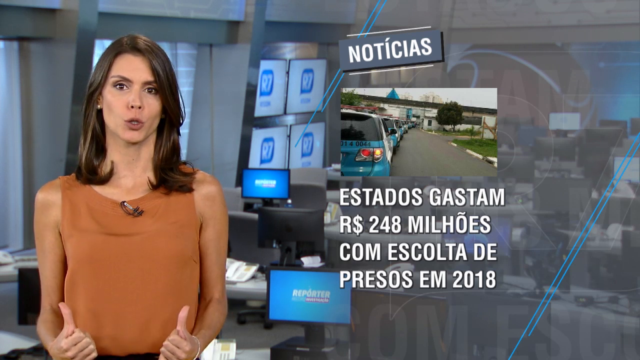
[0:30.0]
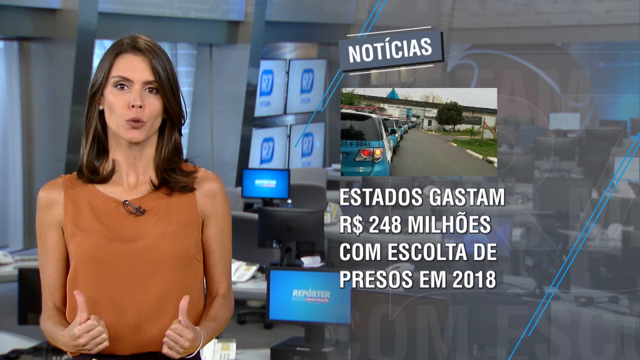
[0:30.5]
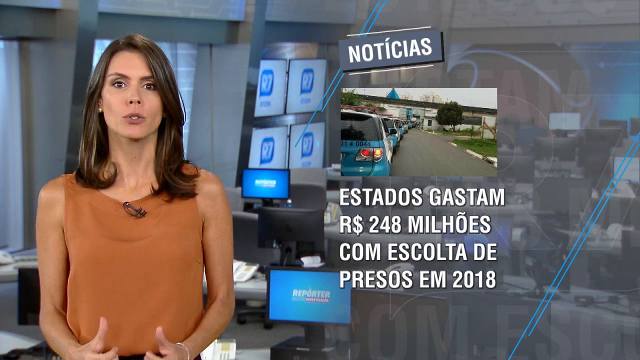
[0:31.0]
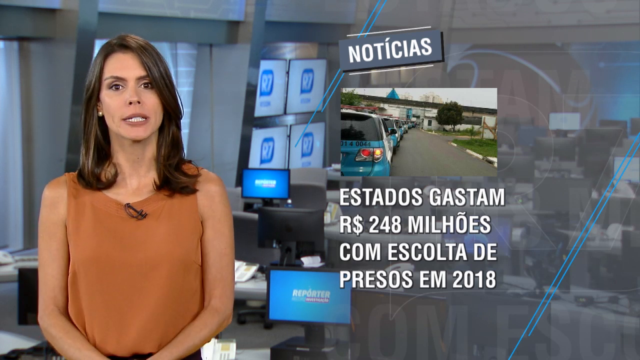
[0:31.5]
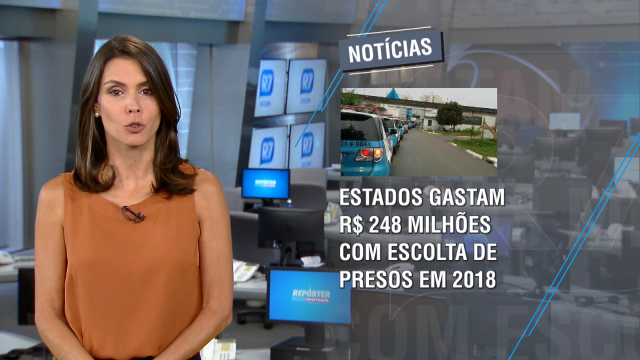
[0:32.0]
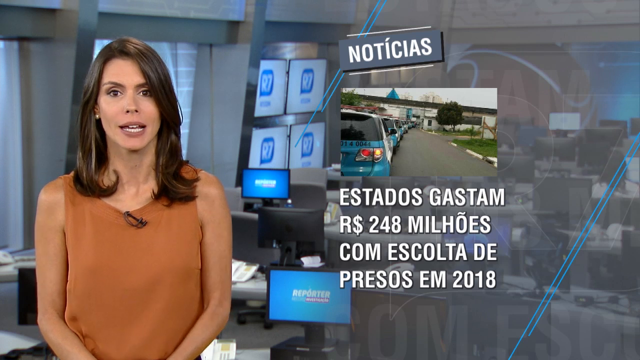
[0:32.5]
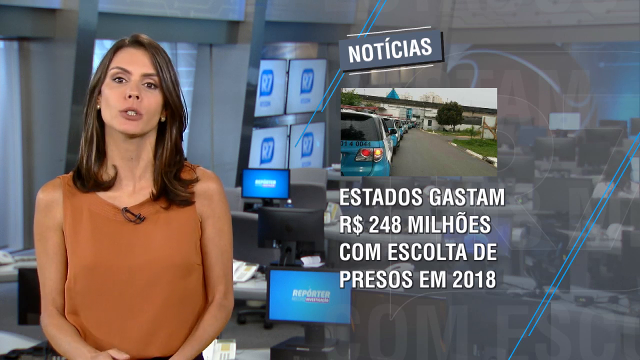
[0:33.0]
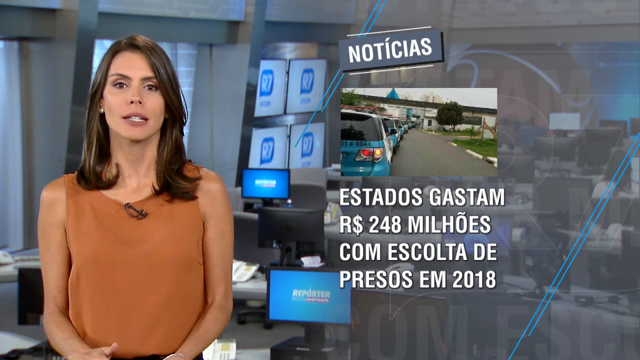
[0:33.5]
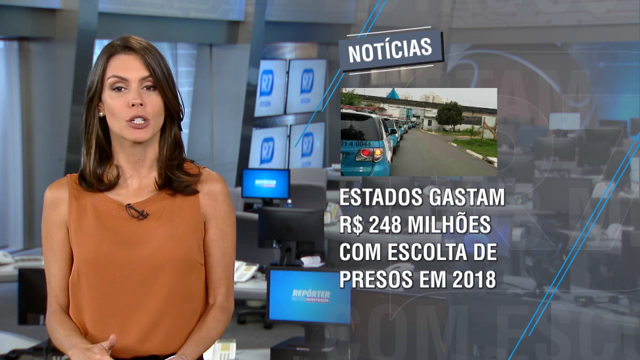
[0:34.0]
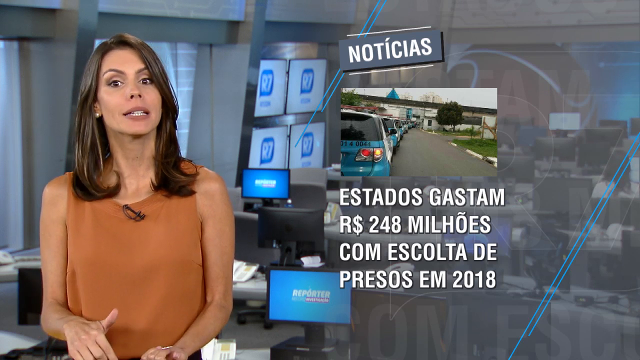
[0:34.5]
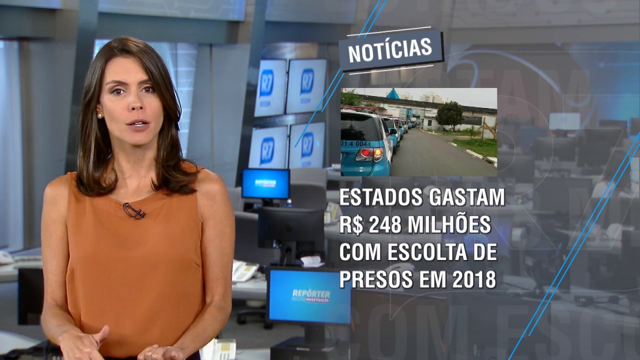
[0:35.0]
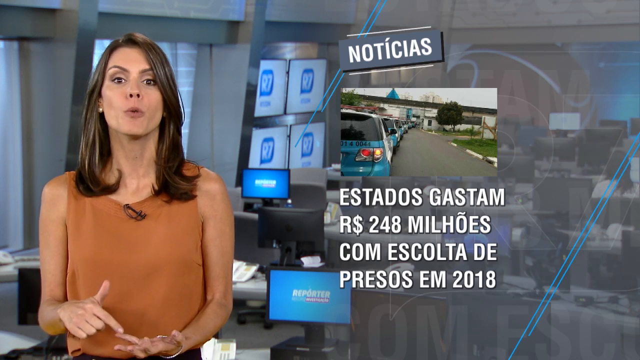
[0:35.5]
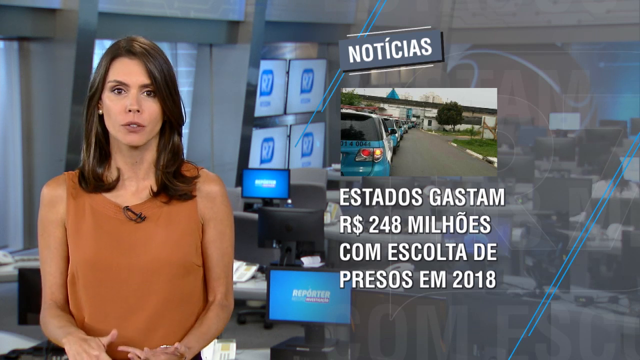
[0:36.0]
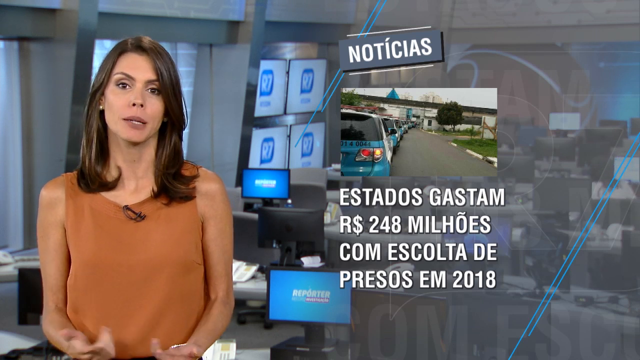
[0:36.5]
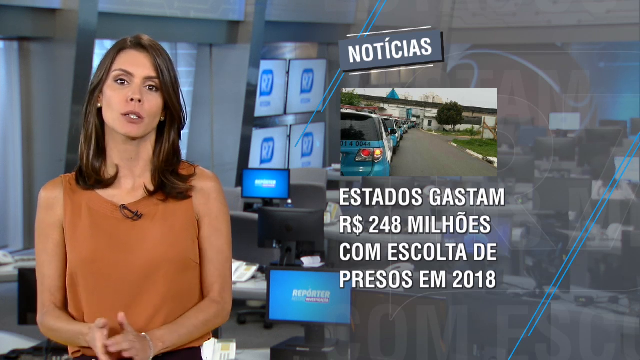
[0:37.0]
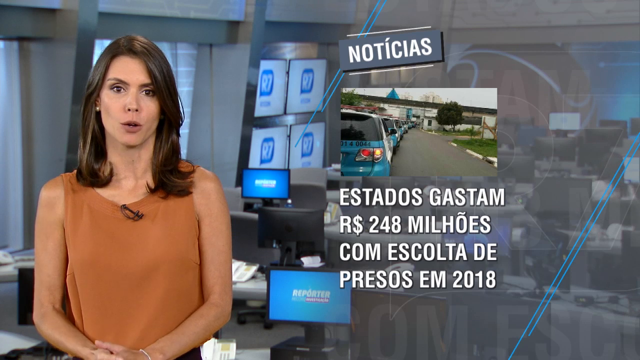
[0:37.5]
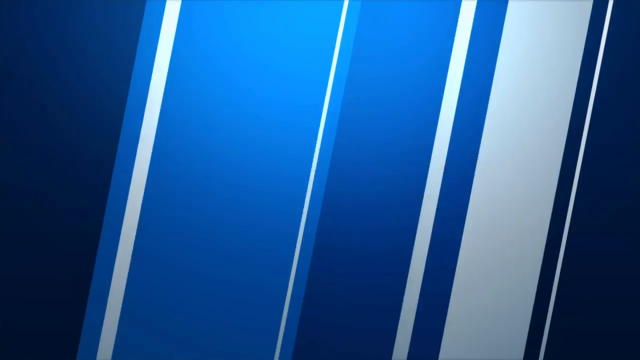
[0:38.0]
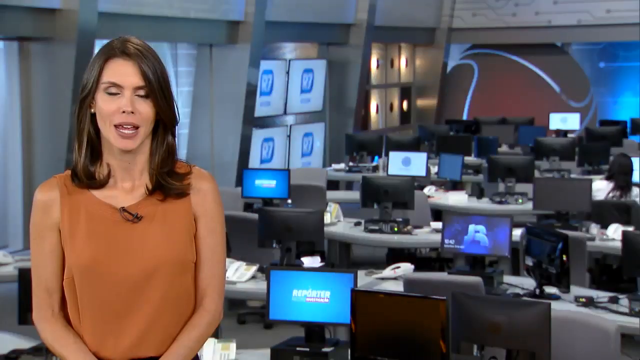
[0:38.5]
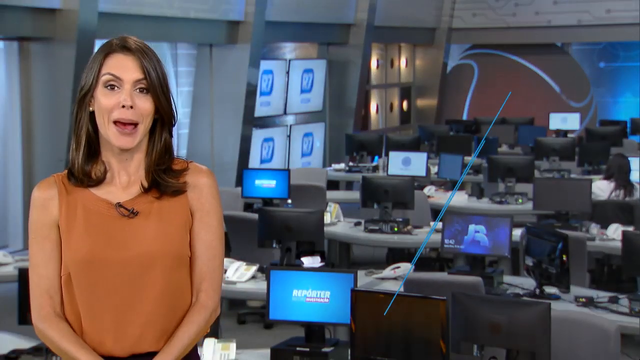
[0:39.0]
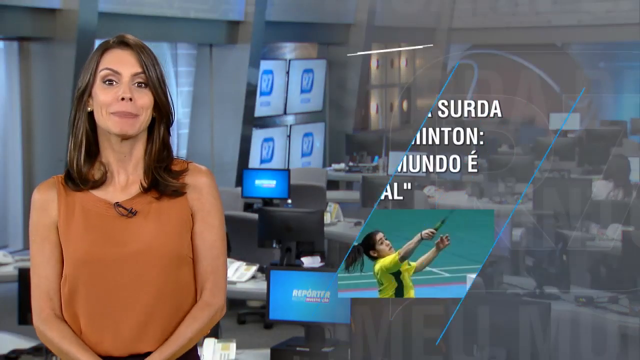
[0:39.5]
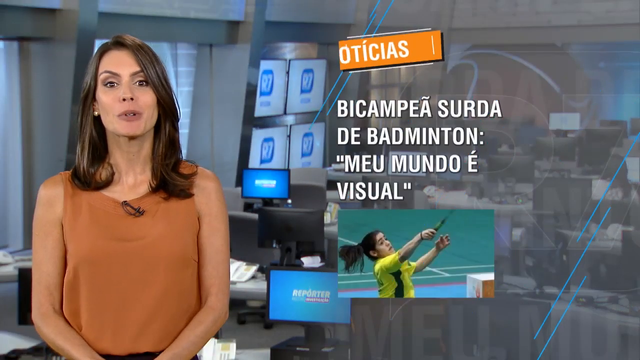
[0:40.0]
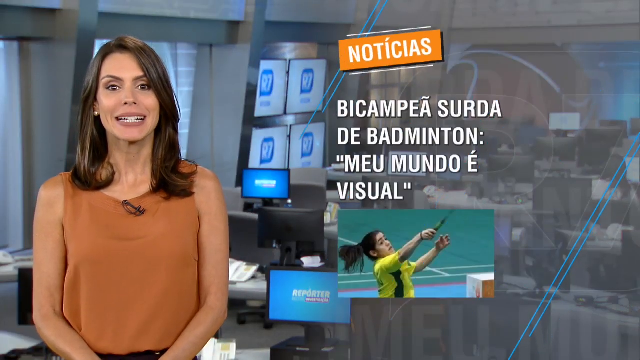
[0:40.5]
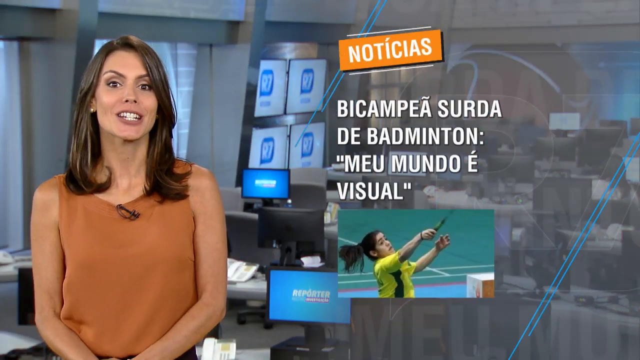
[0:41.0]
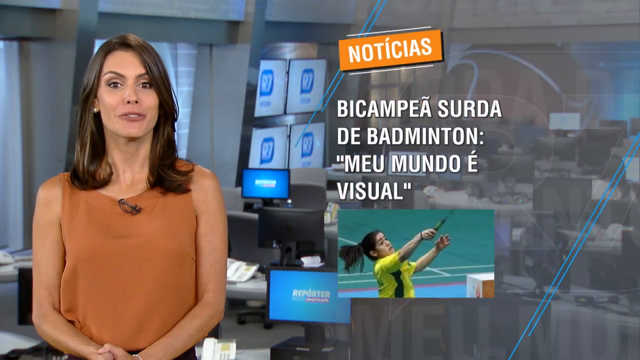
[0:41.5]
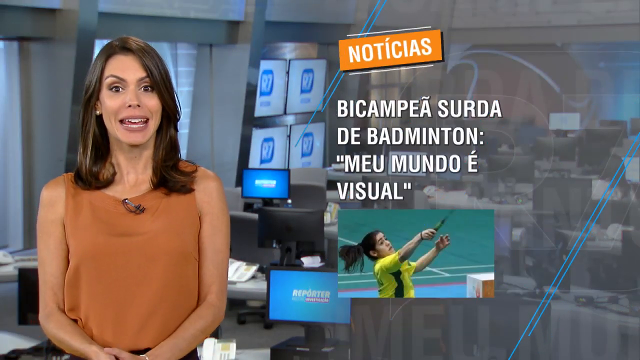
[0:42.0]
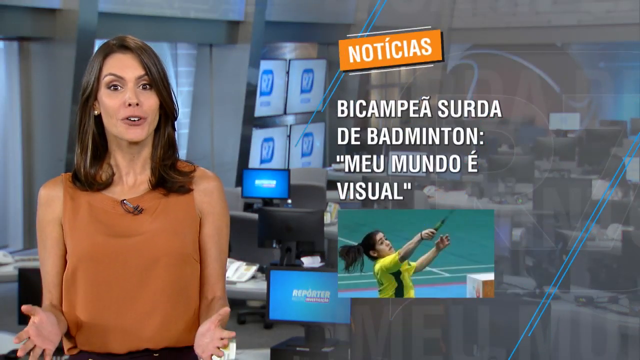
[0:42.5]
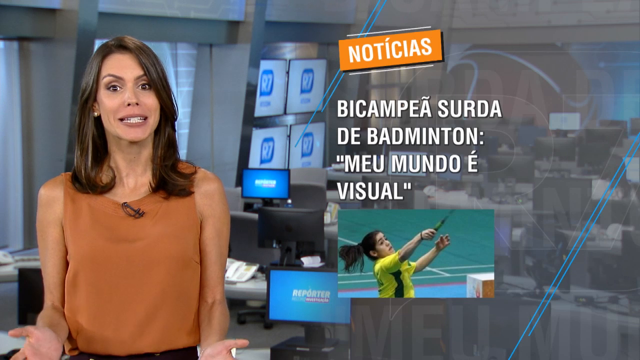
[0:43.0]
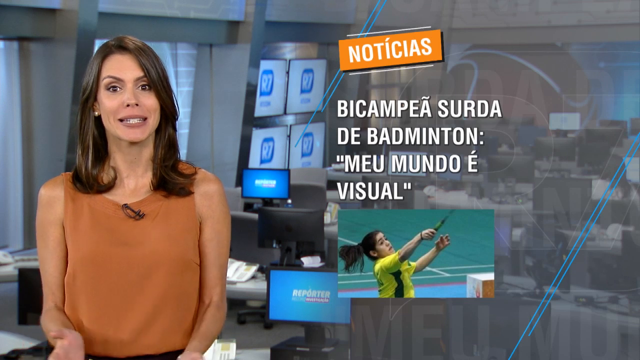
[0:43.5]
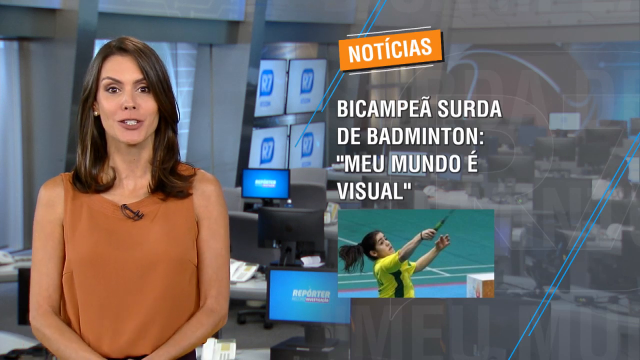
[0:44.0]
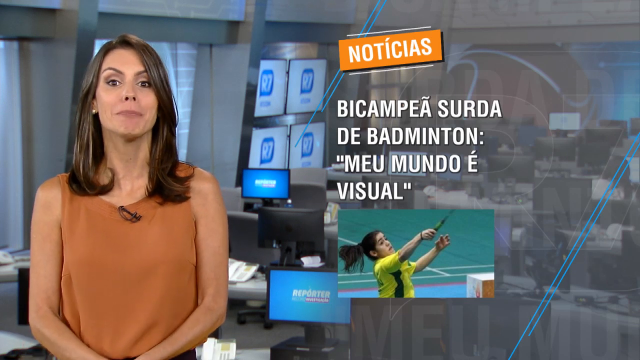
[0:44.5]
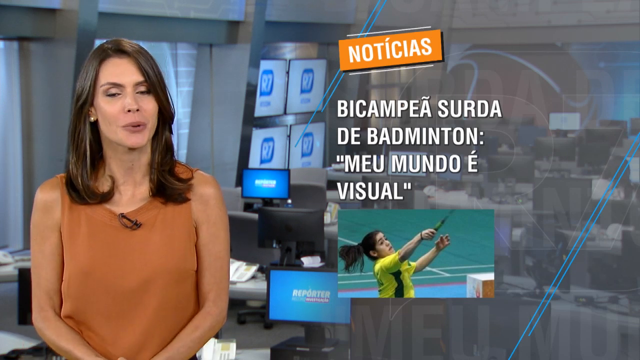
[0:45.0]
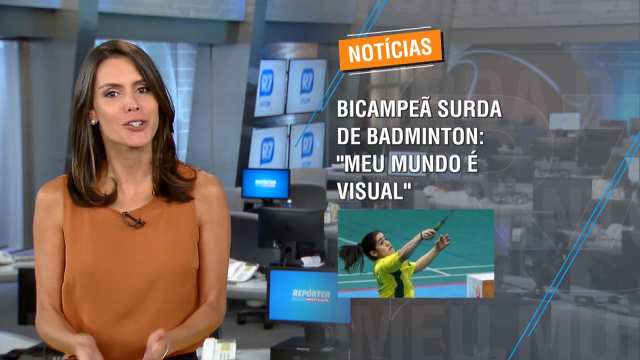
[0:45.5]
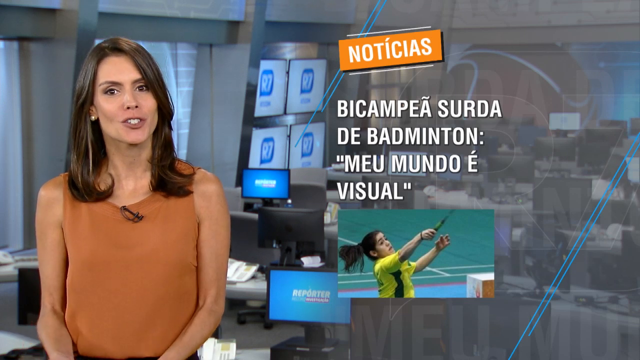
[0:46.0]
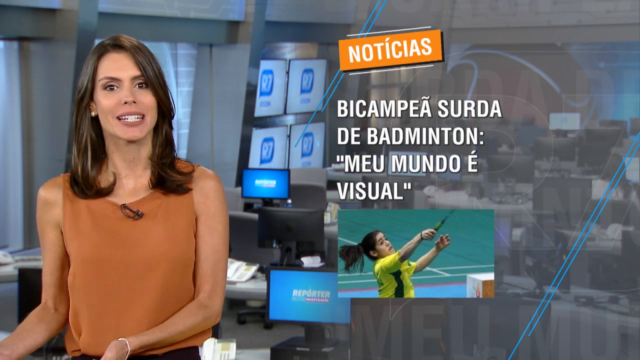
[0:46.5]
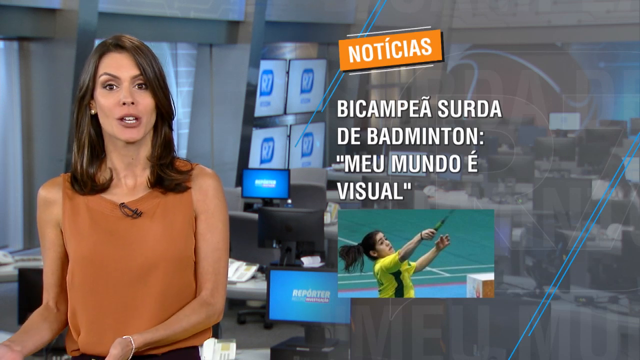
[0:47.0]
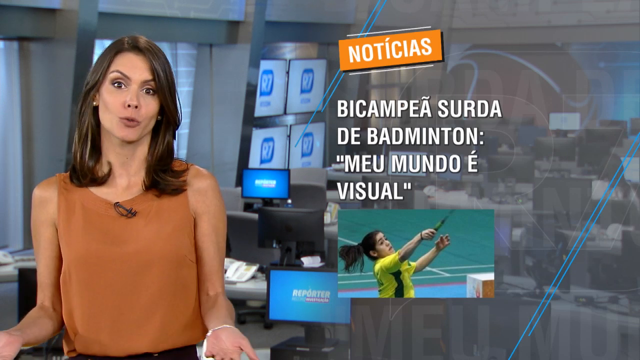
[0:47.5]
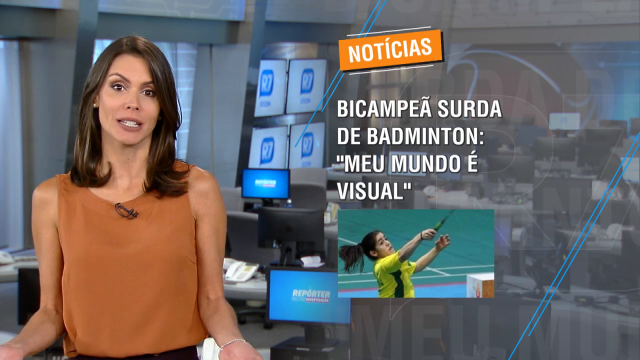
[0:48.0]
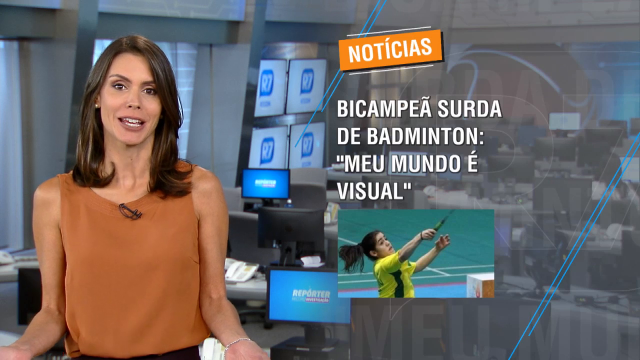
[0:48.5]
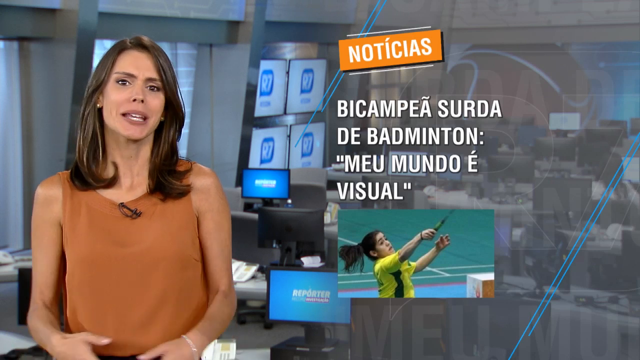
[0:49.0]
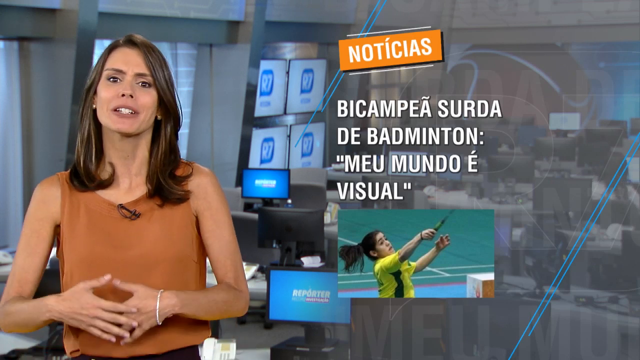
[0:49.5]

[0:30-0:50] The news title still reads "the state spent millions on prisoner escorts in 2018," and the female newscaster on the left is still talking about the topic. She looks like she is in her 40s, with straight, shoulder-length hair, and she is tan and wears a sleeveless brown shirt with a U collar. The next segment is about sports: a two-time deaf badminton champion who says her world is visual. A photo shows her playing badminton during a competition in a blue and yellow uniform, about to hit something with her paddle. A "noticia" sign on an orange background is above the news title.